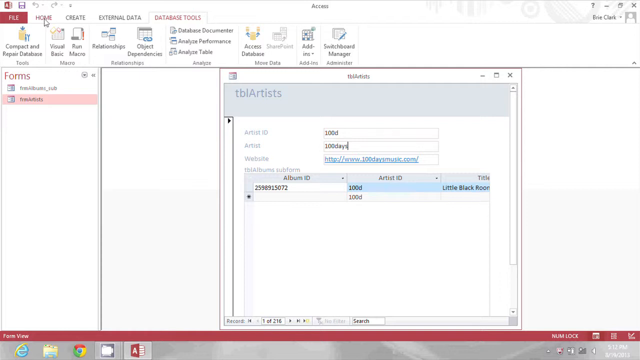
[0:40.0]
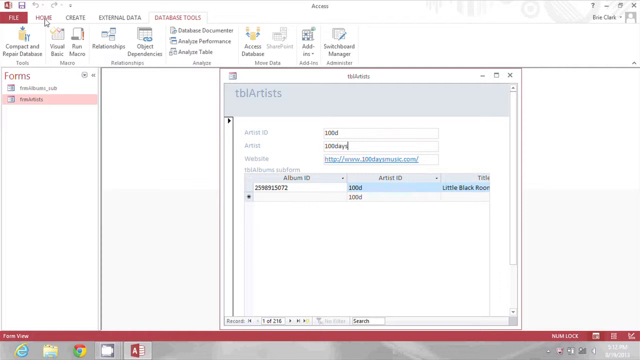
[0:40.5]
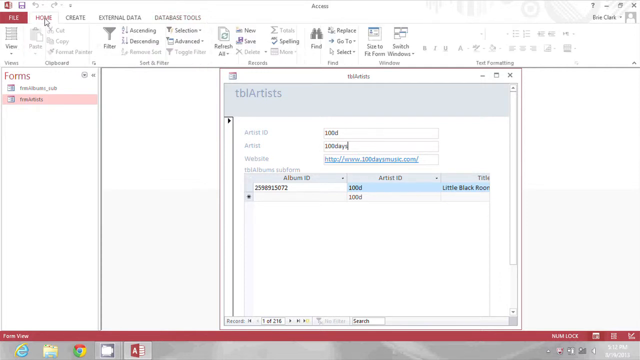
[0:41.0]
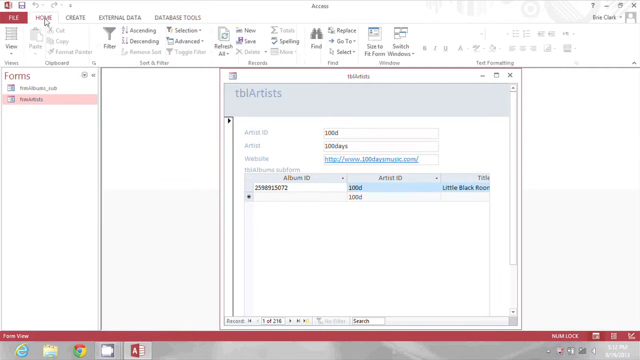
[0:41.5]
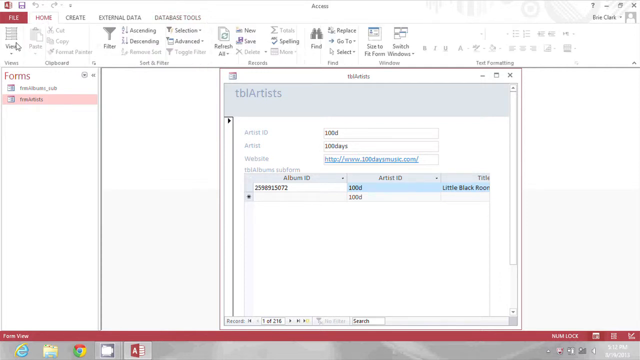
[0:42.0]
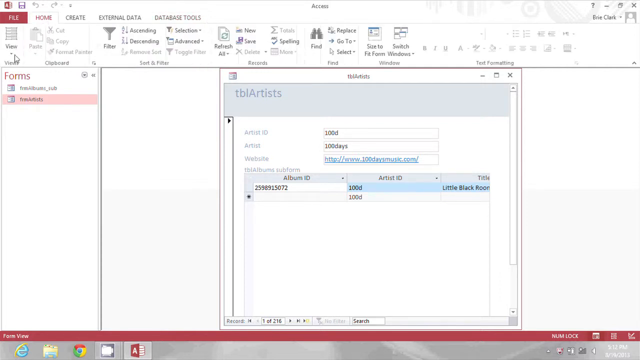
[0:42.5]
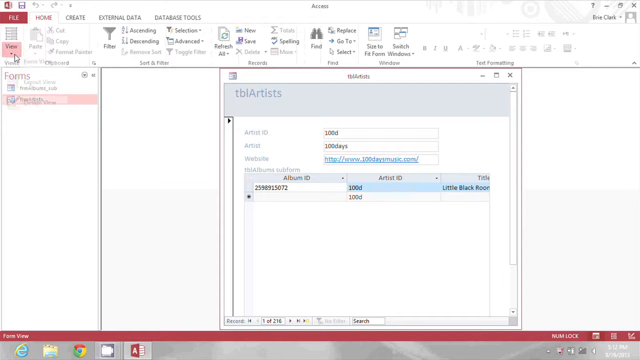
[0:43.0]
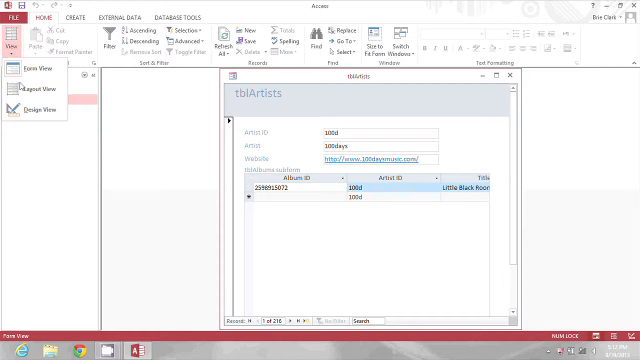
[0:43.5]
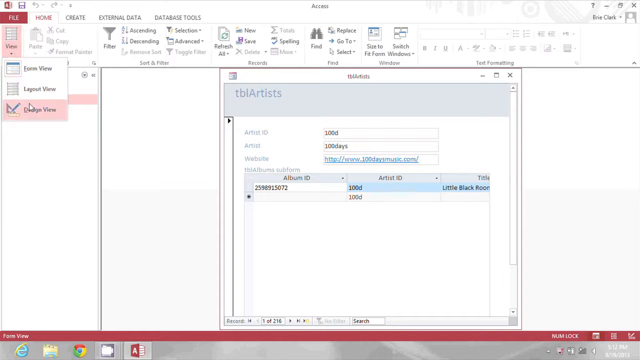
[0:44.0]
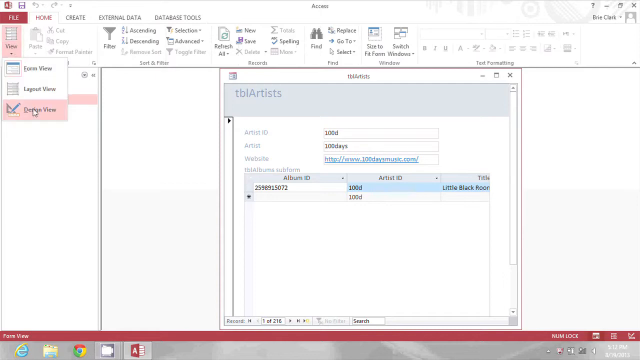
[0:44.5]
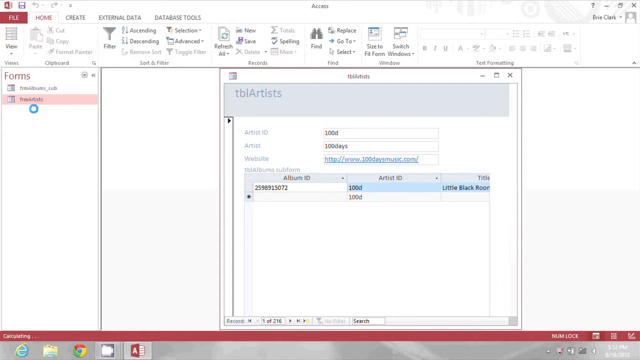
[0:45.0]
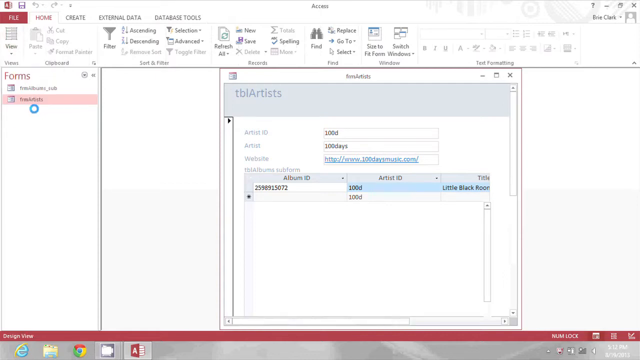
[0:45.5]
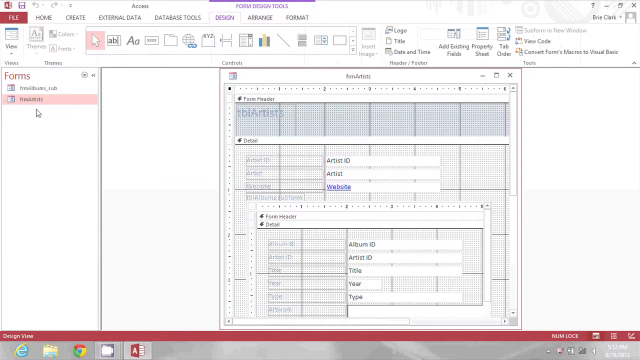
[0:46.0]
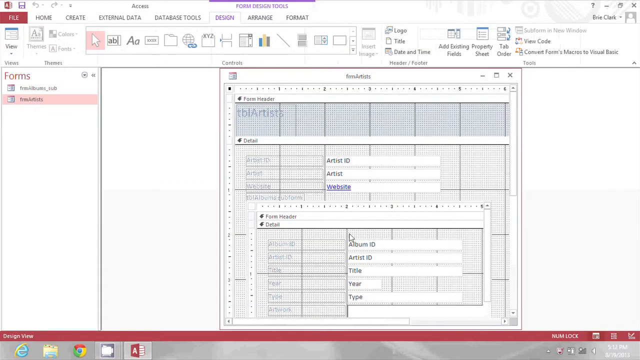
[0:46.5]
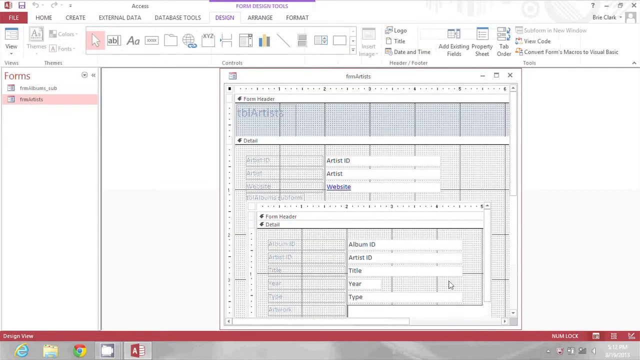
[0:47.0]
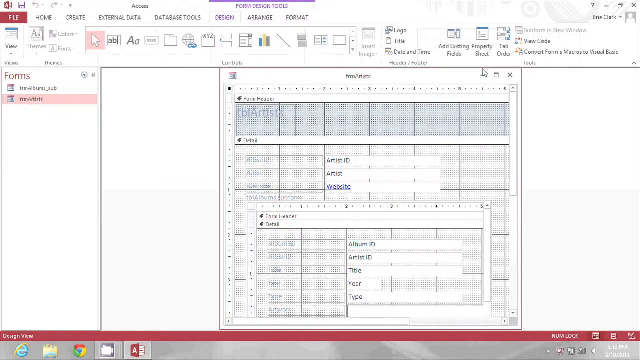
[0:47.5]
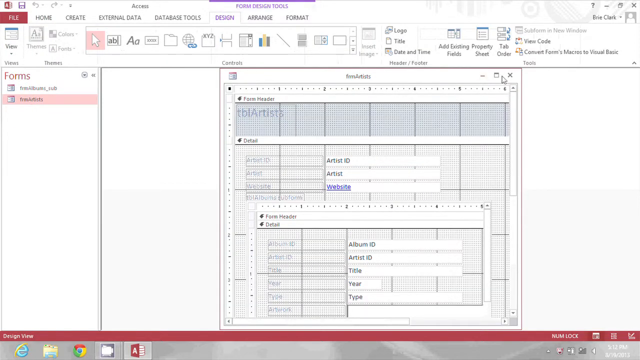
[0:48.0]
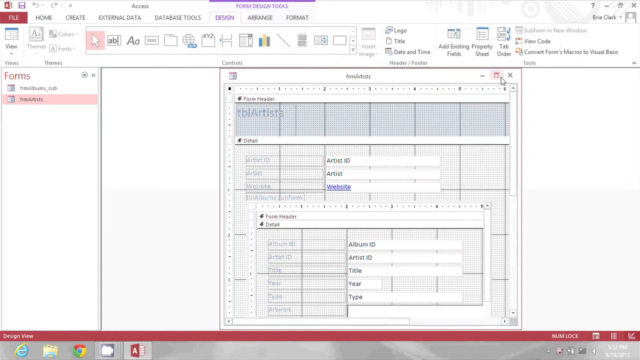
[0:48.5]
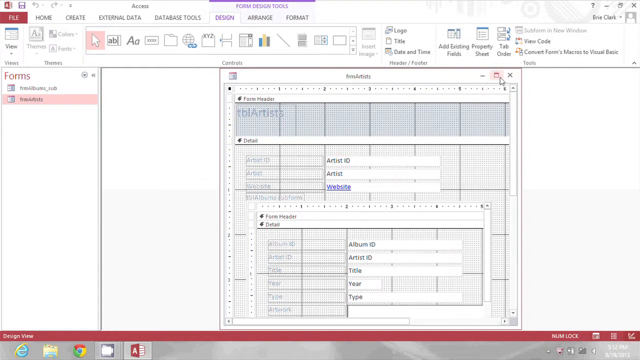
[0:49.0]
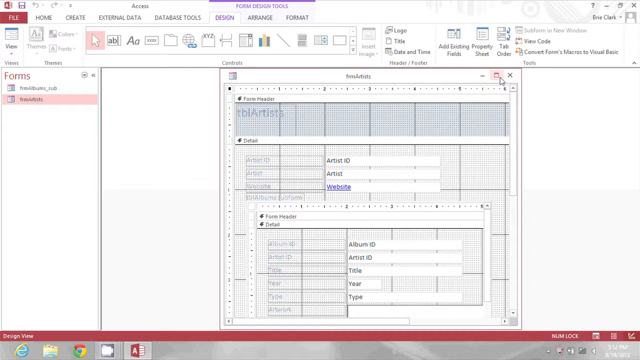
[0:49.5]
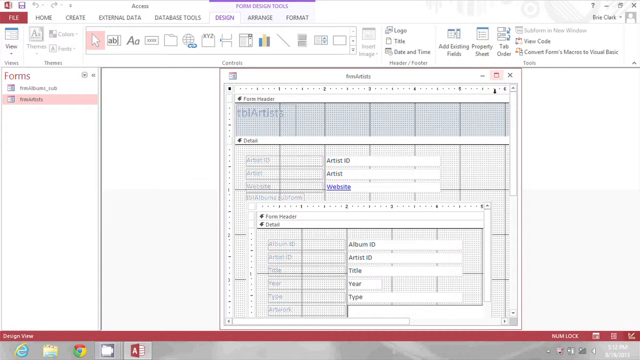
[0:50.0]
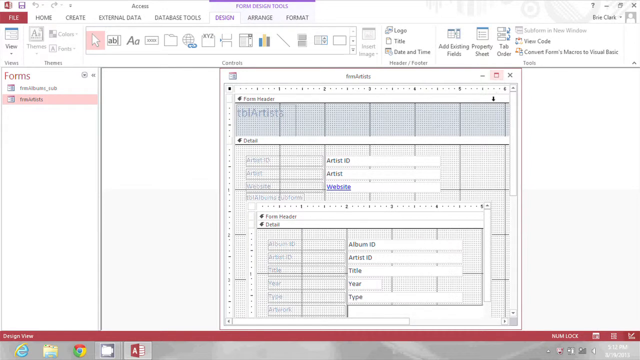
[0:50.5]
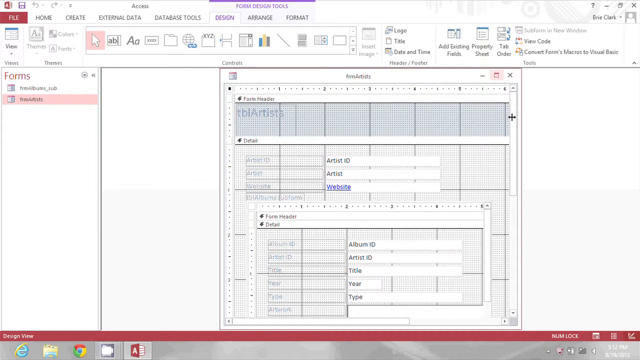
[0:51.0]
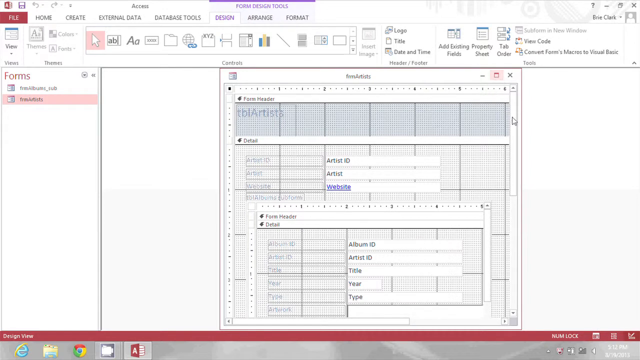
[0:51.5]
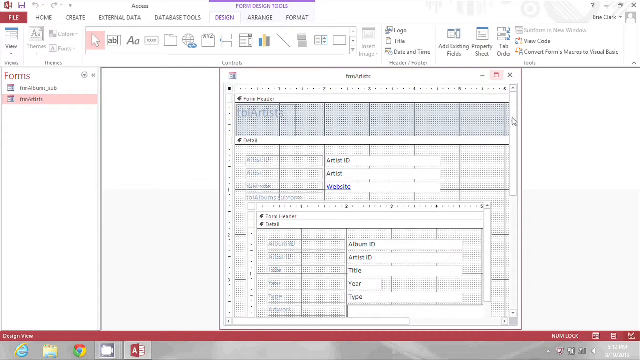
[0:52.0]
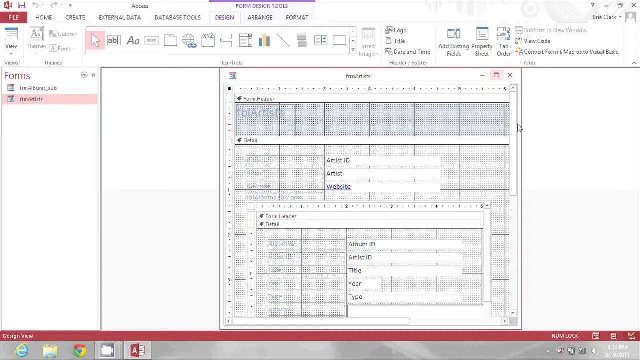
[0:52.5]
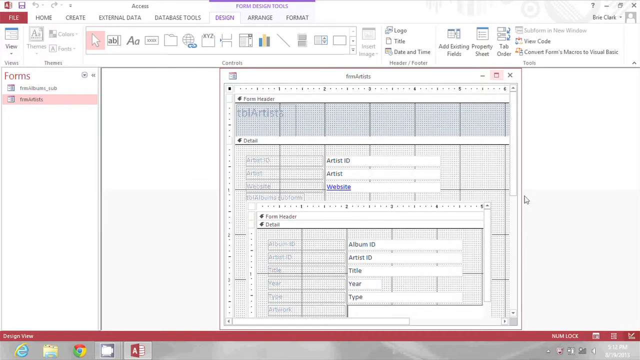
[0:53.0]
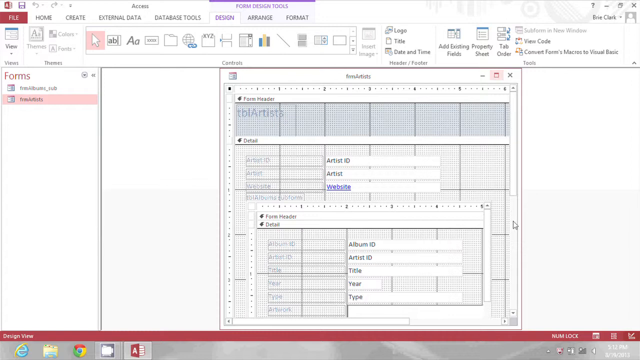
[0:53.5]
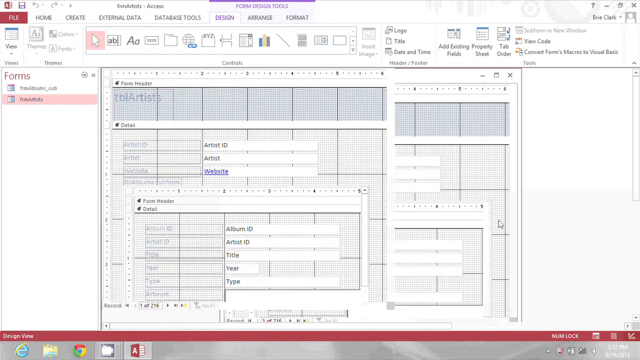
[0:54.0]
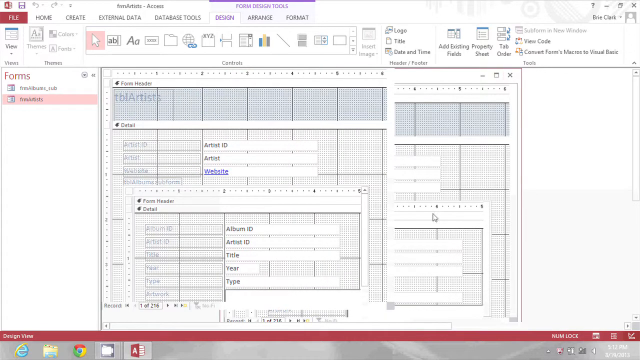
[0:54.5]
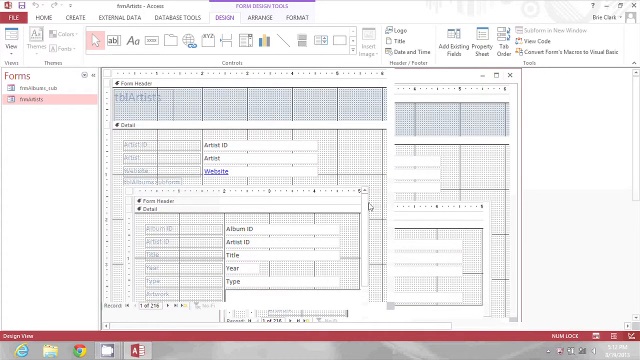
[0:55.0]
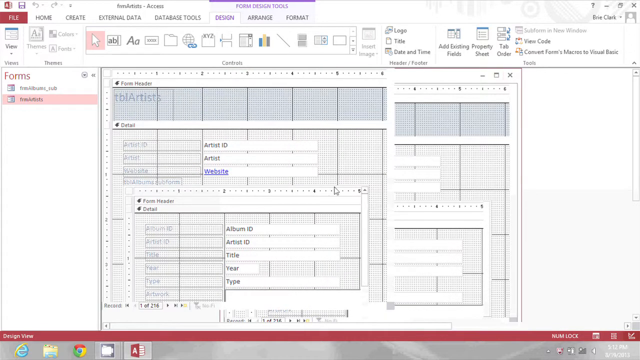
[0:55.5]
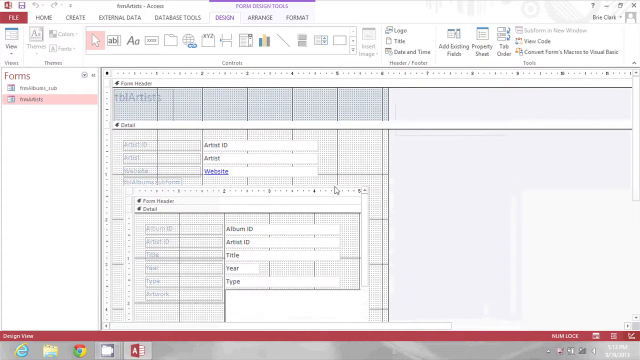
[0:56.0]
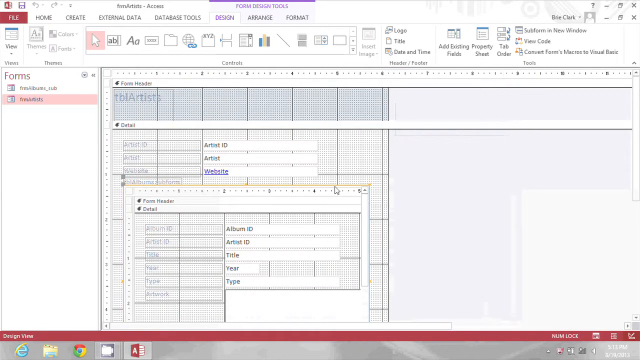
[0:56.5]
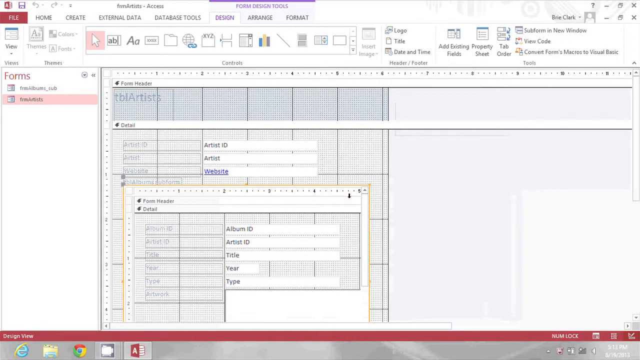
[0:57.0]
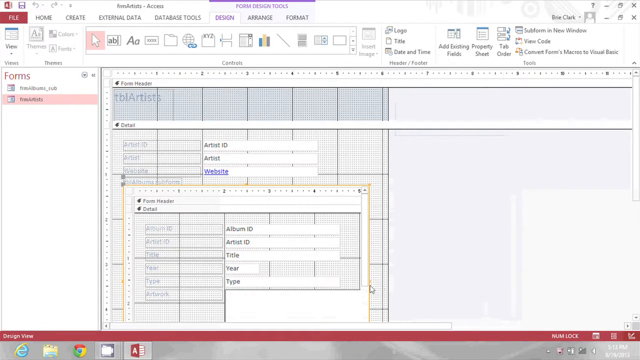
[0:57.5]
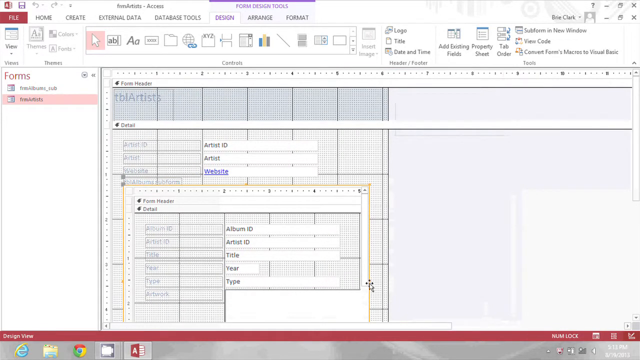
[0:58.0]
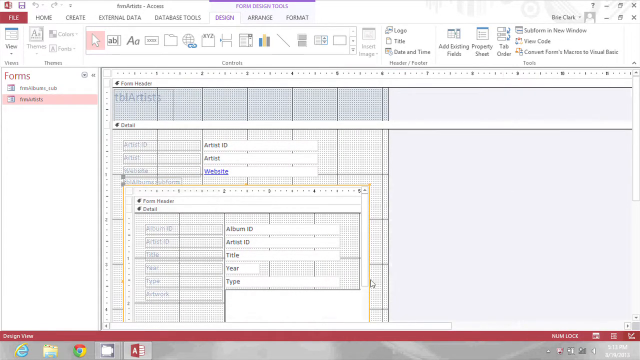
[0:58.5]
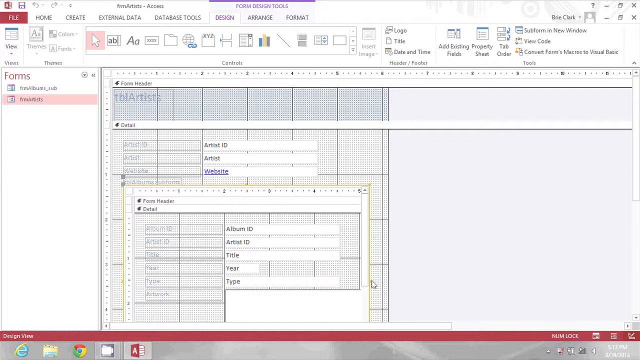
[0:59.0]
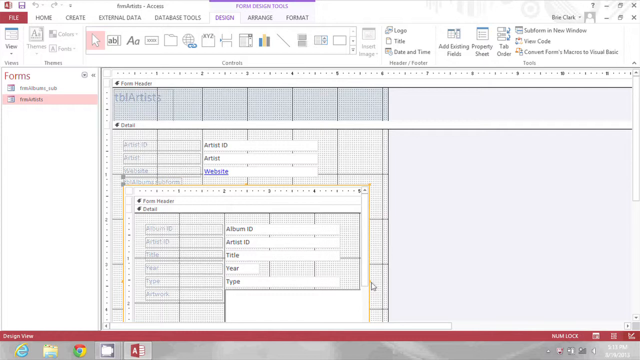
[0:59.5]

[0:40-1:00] The site she was on loads up. It has an all-white backdrop, making it hard to see what she is working on. There are a bunch of graphs that are mostly white, with a little bit of gray in them, and they are very small, so not everything can be made out. Text on the page says "artist ID 100D, artist 100 days, website". Overall it is a lot of white-on-white graphs with a little gray in the background.